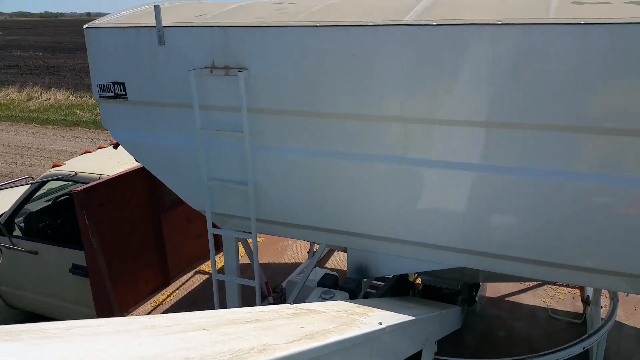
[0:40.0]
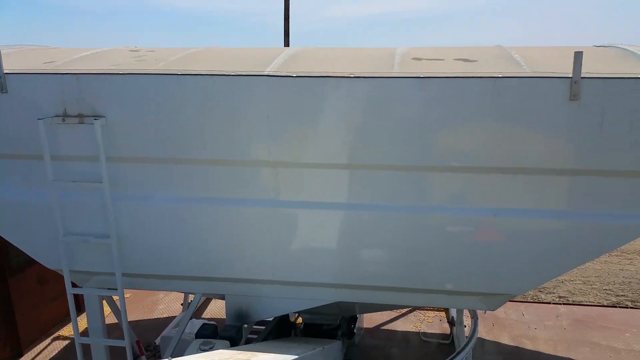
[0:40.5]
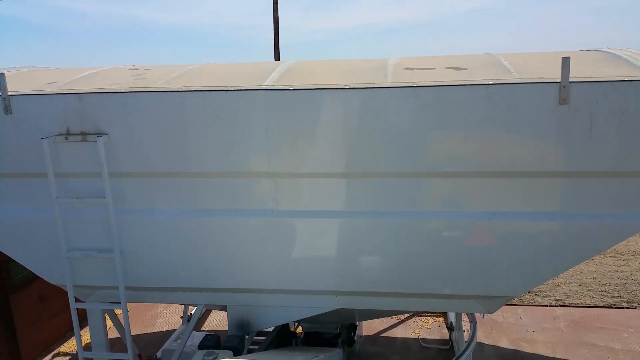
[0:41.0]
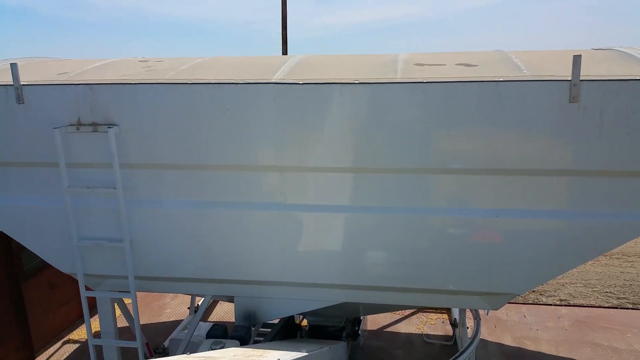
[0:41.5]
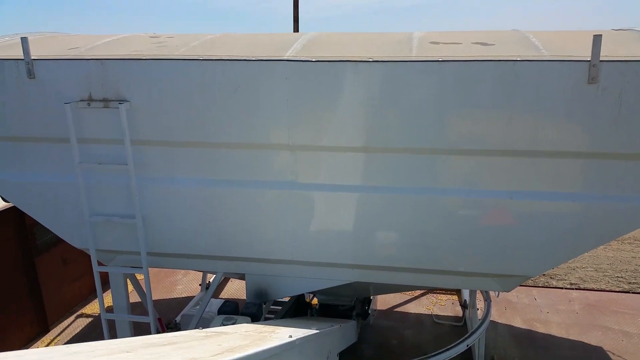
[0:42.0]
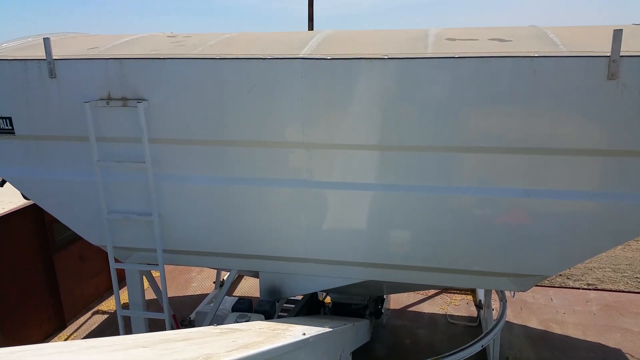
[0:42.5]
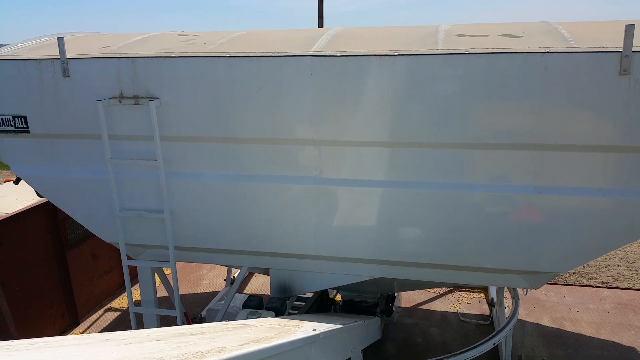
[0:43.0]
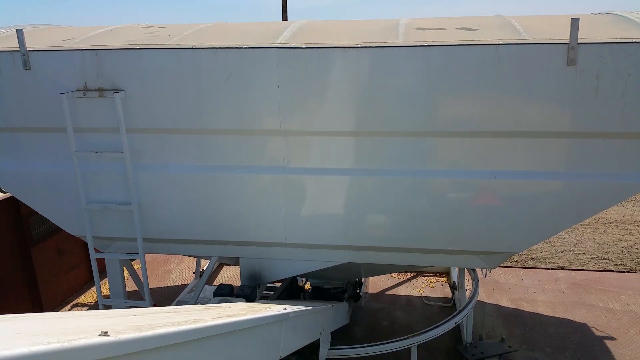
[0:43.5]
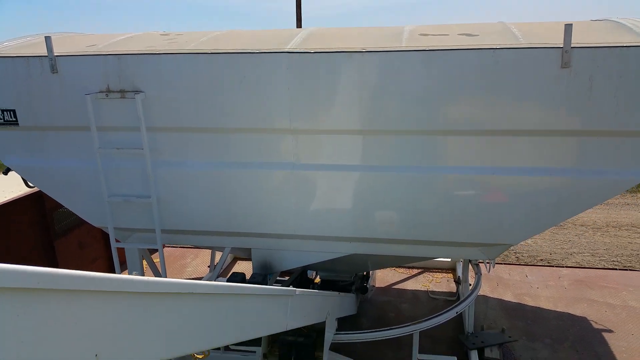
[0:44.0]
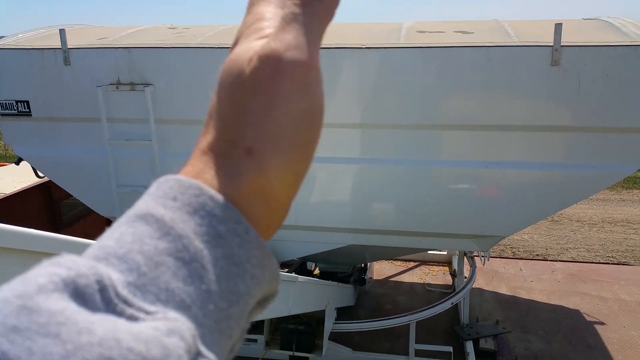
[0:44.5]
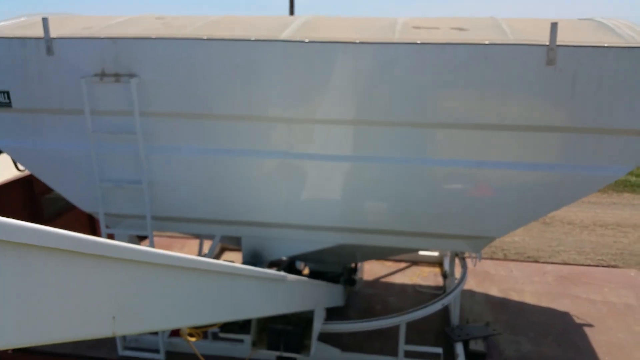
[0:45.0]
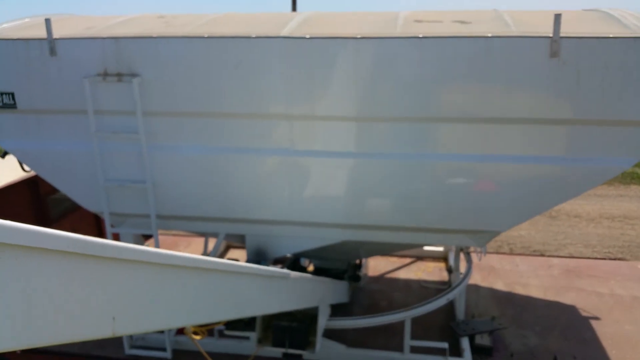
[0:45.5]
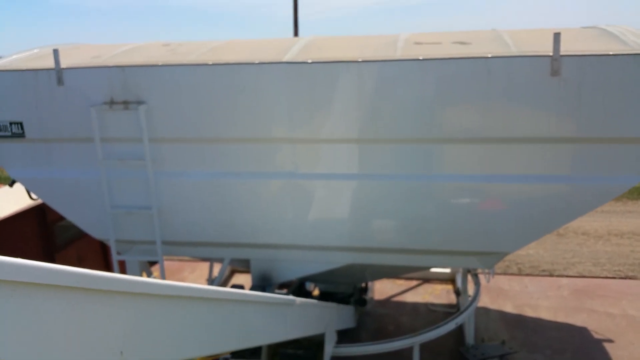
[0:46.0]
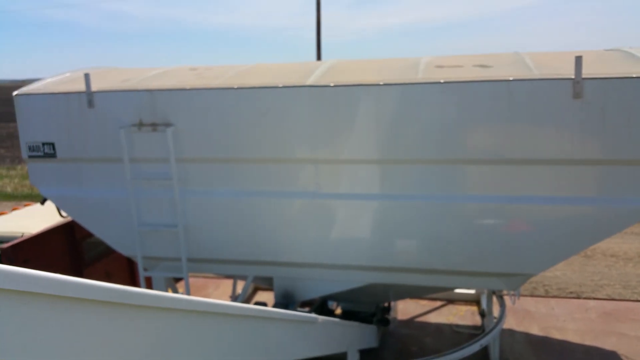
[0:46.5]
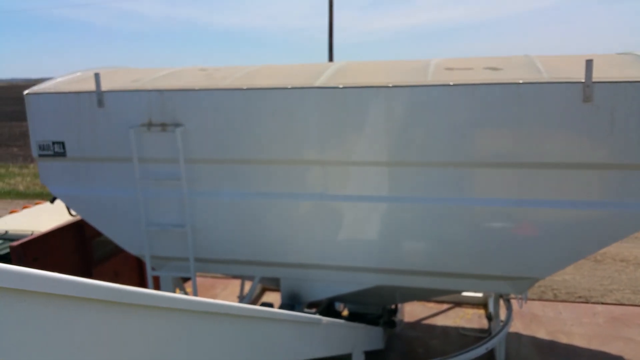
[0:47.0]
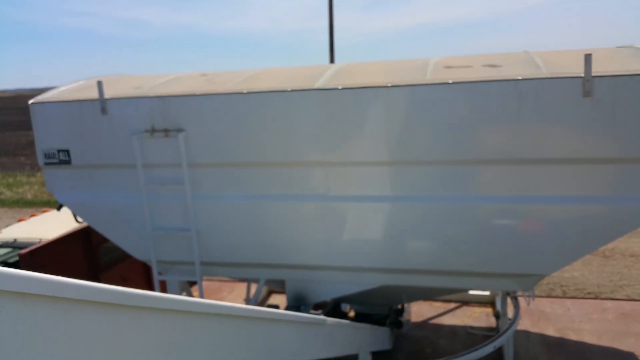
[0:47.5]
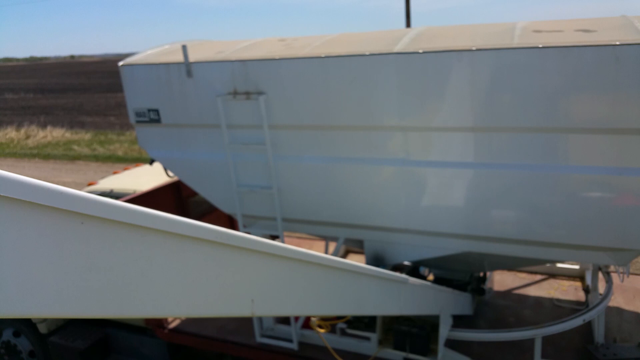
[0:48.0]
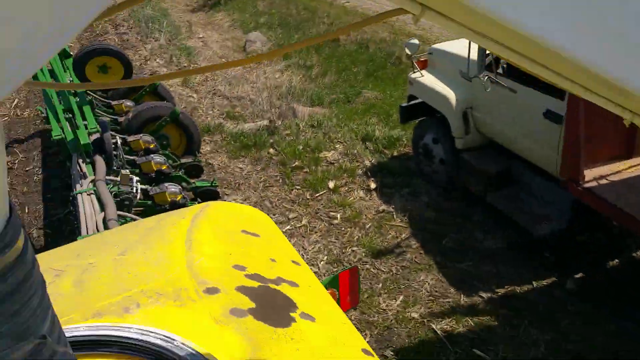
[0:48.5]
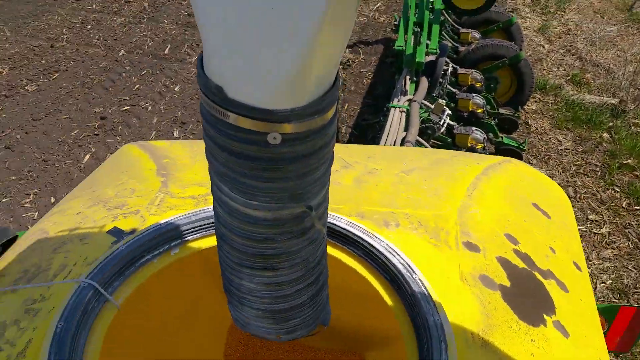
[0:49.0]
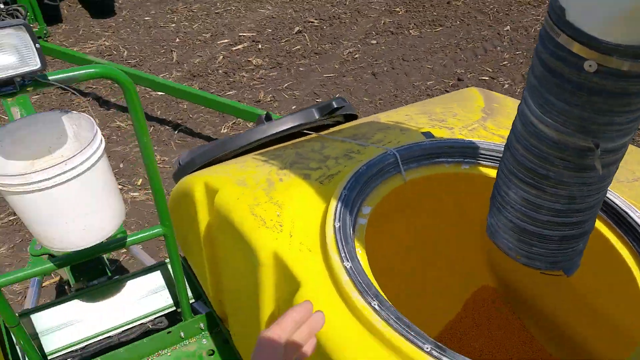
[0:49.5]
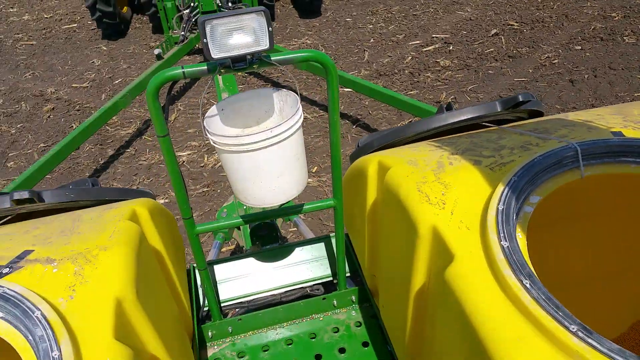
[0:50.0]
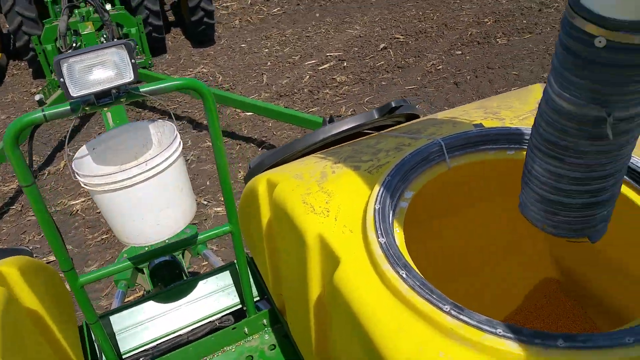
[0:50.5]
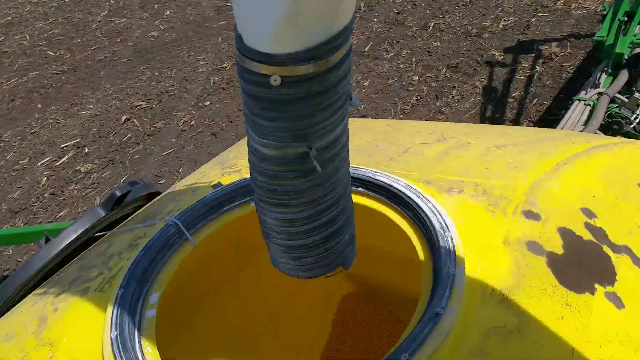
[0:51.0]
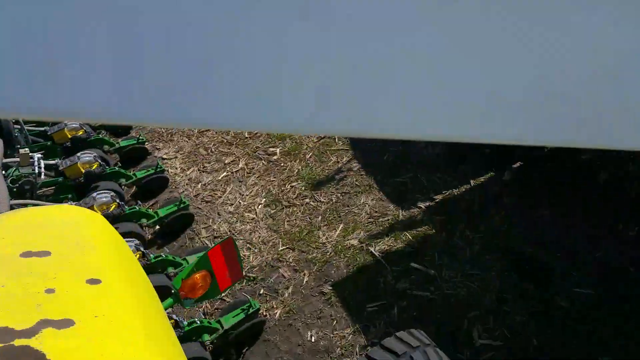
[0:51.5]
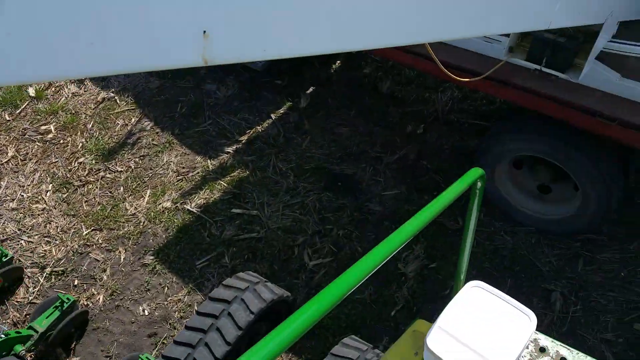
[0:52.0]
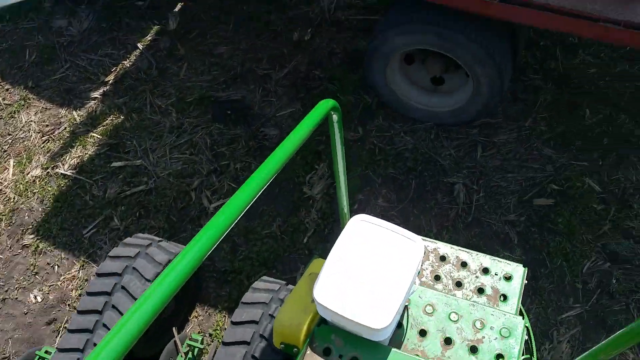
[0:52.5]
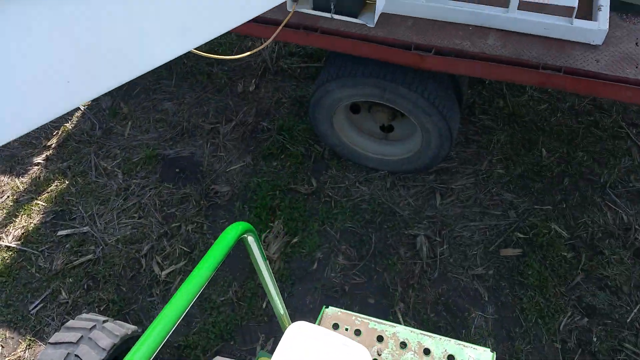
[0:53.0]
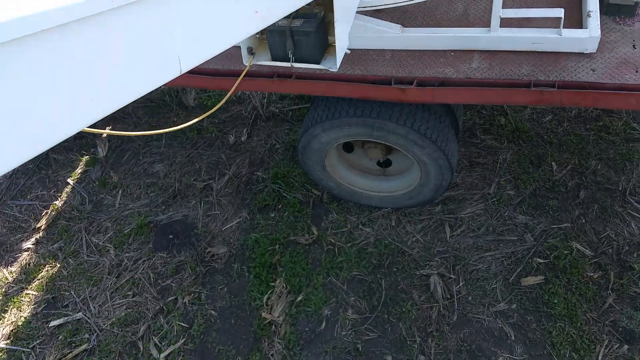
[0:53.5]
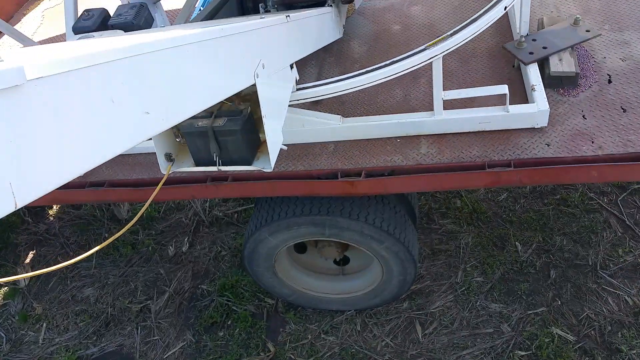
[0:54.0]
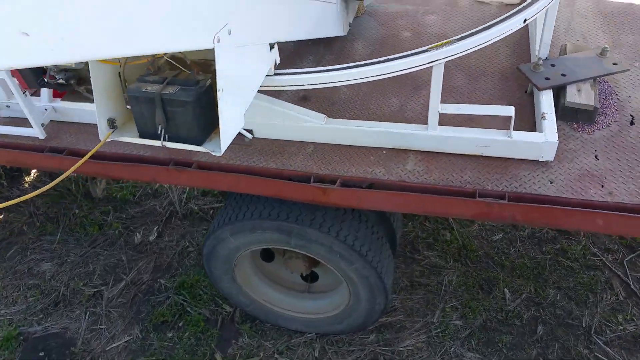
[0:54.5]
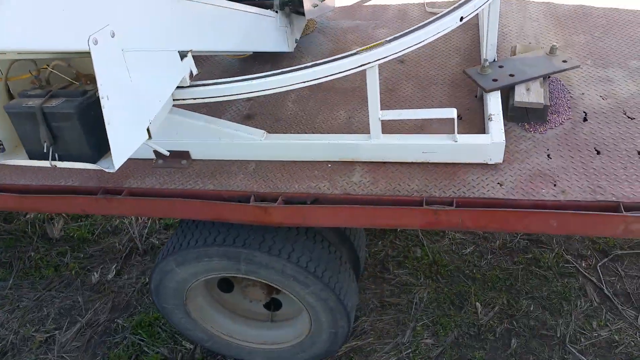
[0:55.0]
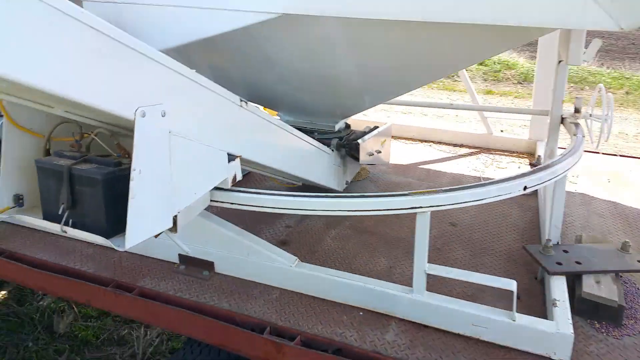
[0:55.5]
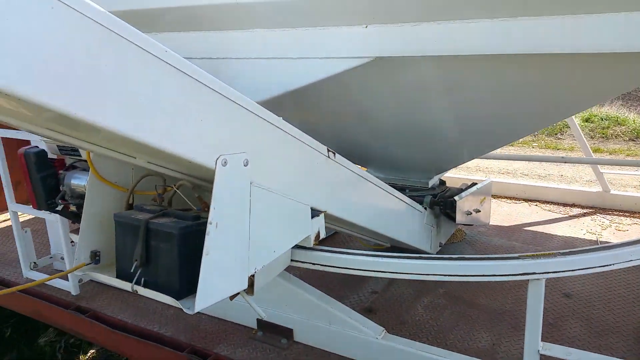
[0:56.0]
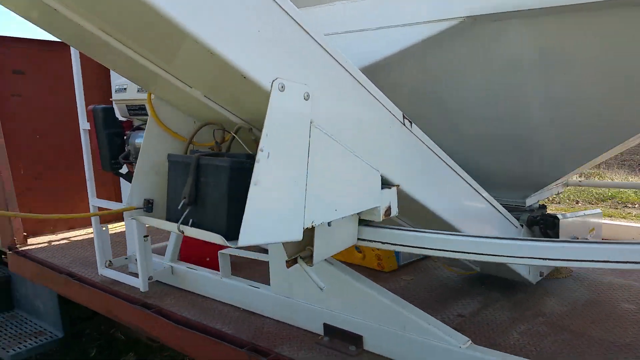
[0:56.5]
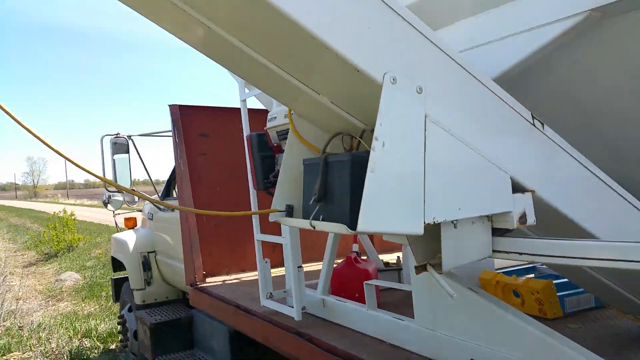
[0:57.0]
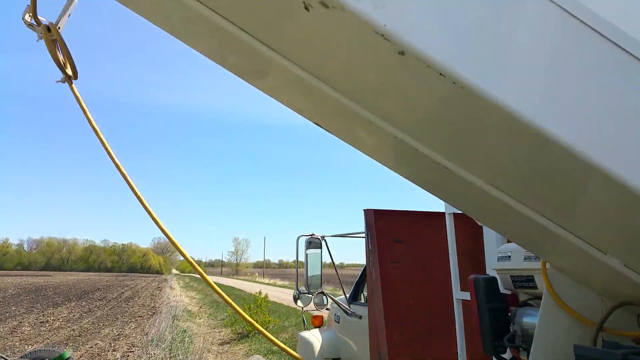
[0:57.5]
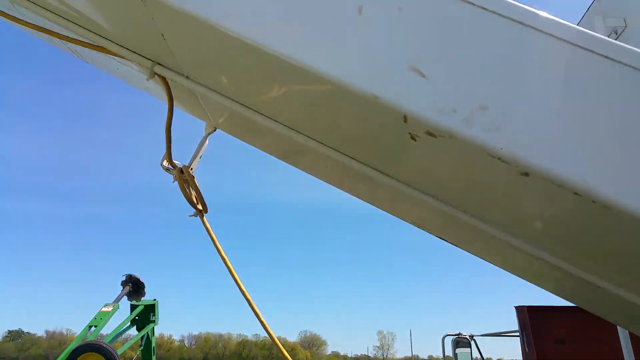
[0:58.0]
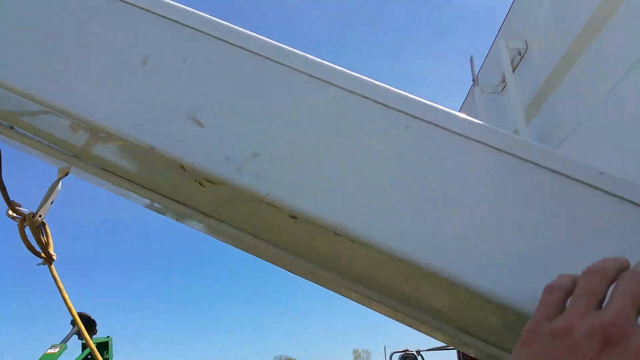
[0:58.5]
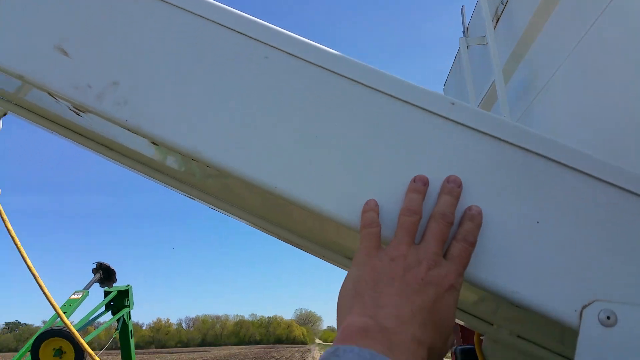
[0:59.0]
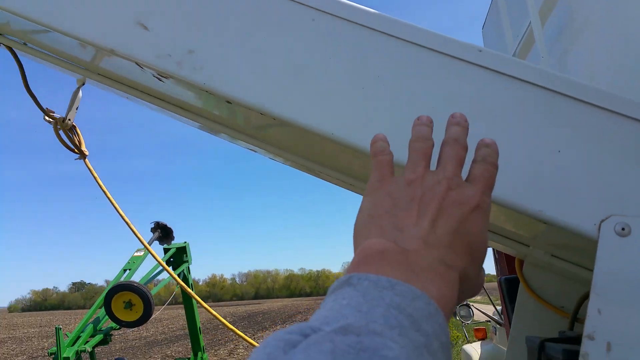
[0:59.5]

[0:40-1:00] The camera stays on the large white container at the back of the truck. The man, not visible behind the camera as he holds it up toward the truck, makes a vertical motion with his hand in front of the camera. The camera then moves back to the large agricultural machine, going left and right and mostly looking at the ground. The camera's movement implies the man is climbing down the ladder, though he is not visible, while the machinery and the long white chute remain in view.